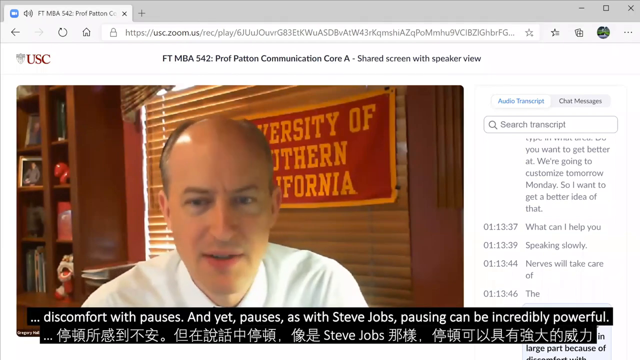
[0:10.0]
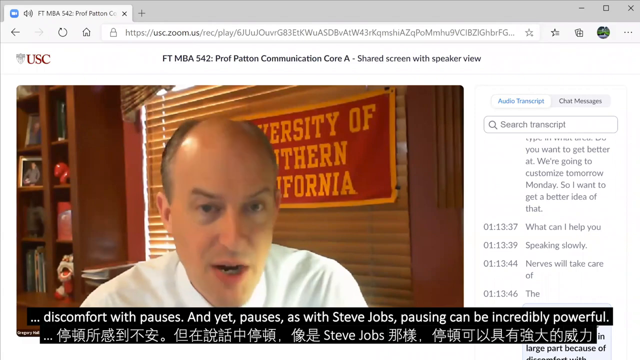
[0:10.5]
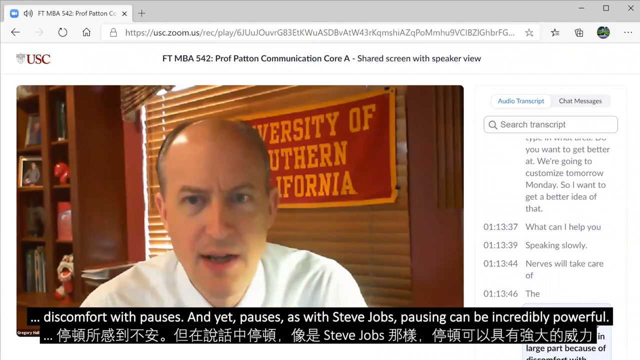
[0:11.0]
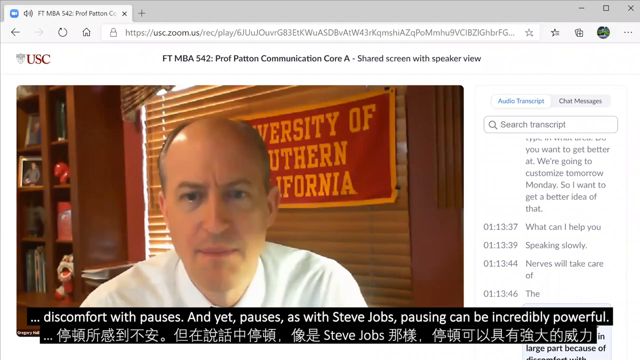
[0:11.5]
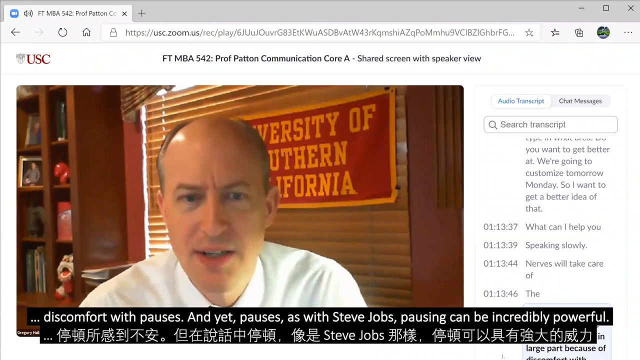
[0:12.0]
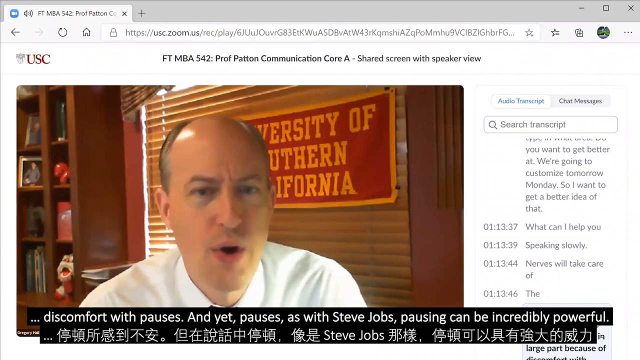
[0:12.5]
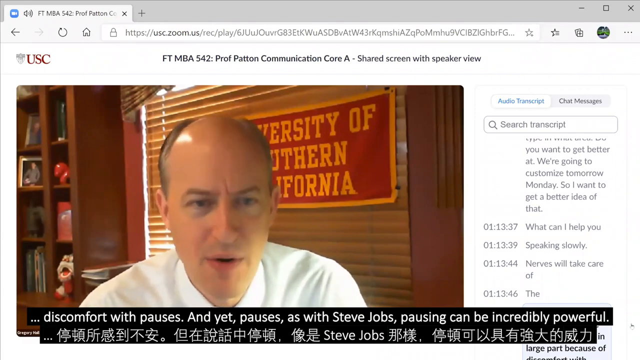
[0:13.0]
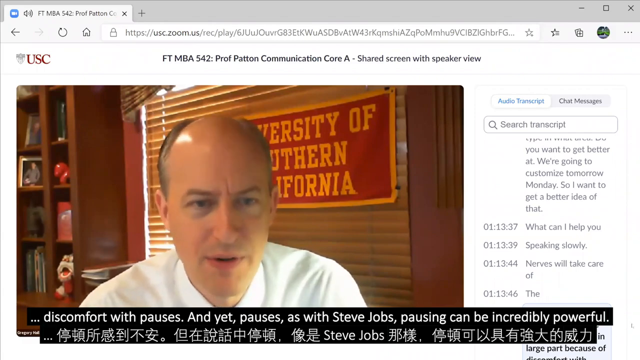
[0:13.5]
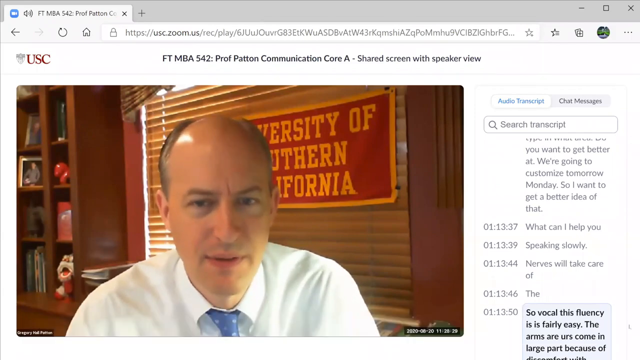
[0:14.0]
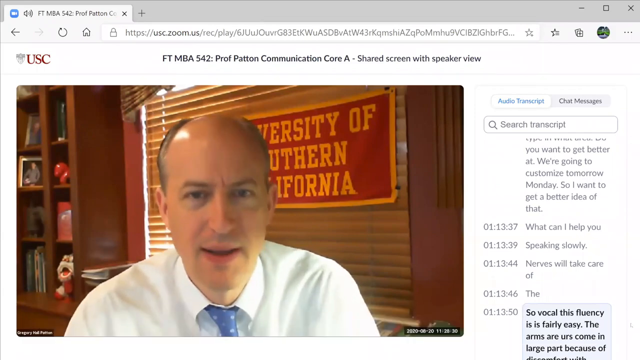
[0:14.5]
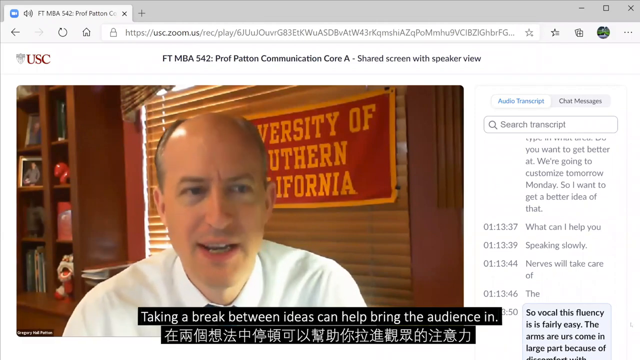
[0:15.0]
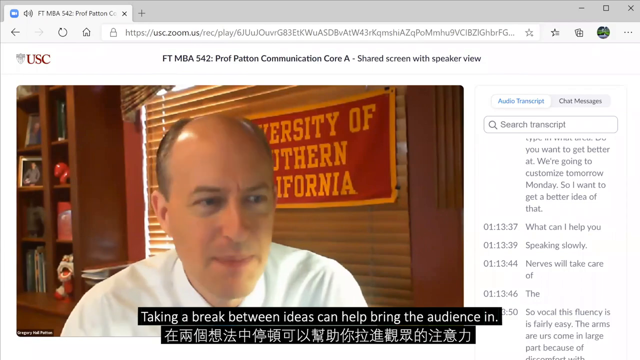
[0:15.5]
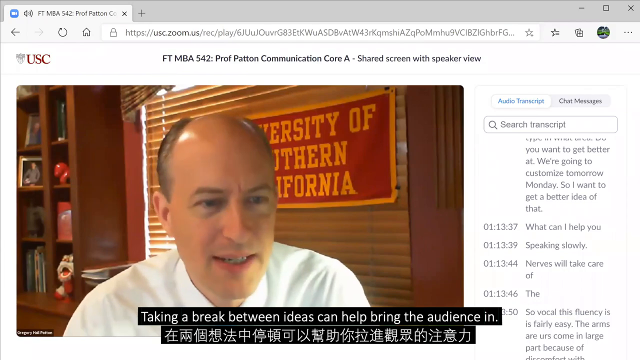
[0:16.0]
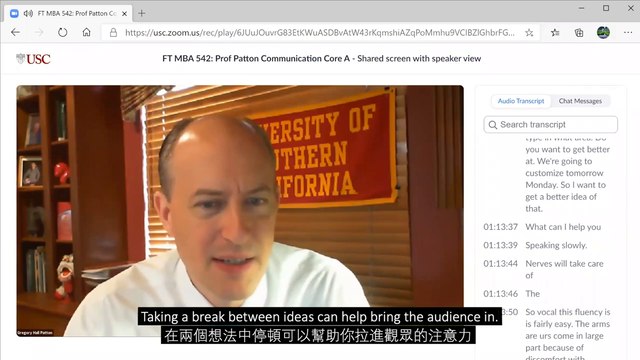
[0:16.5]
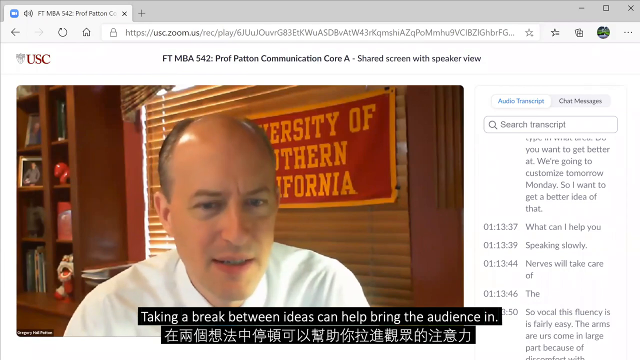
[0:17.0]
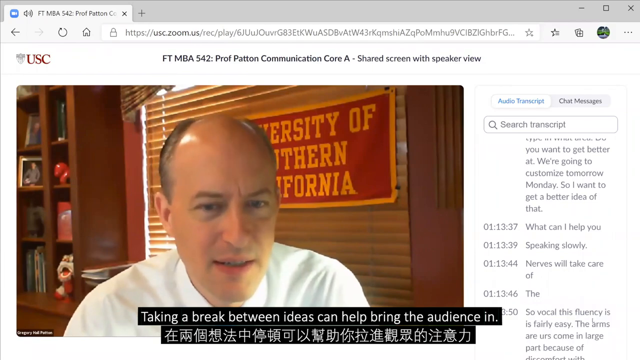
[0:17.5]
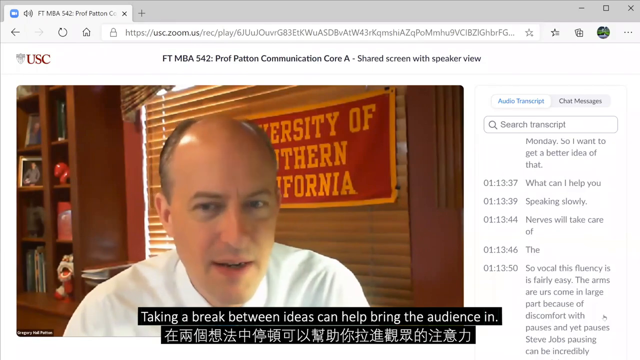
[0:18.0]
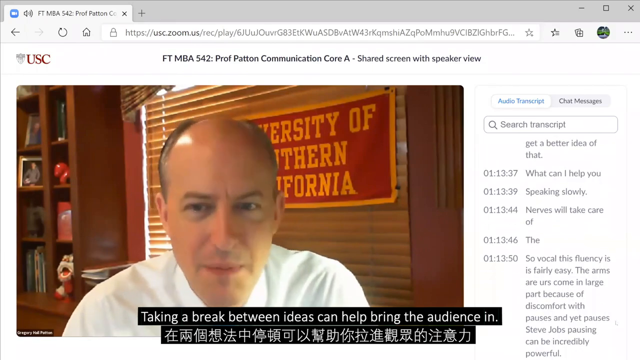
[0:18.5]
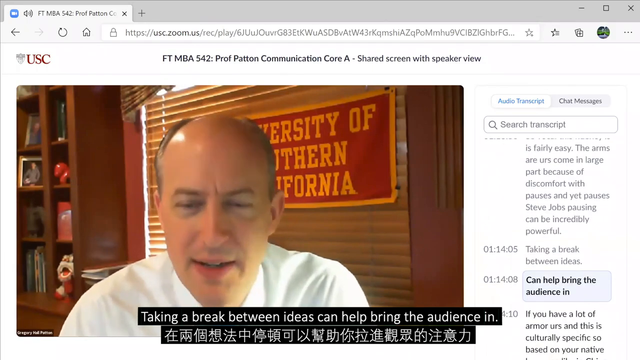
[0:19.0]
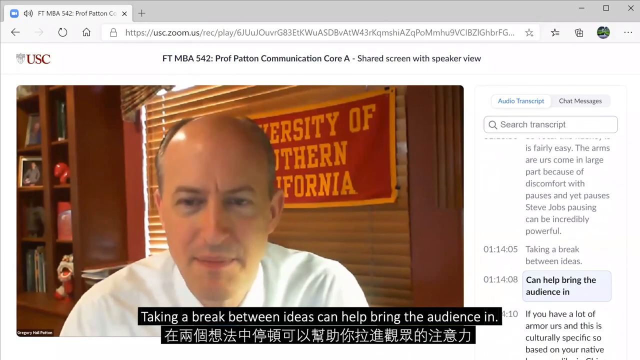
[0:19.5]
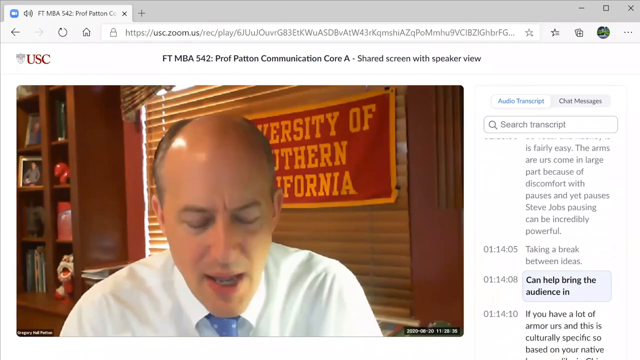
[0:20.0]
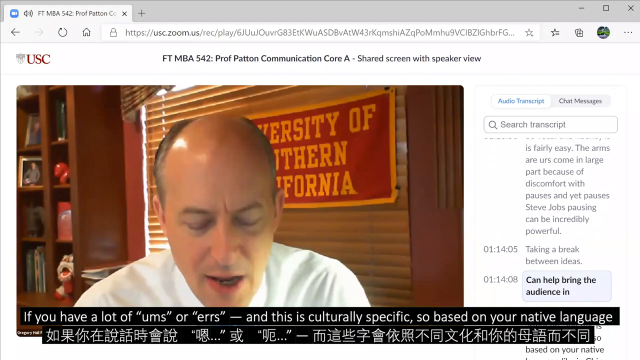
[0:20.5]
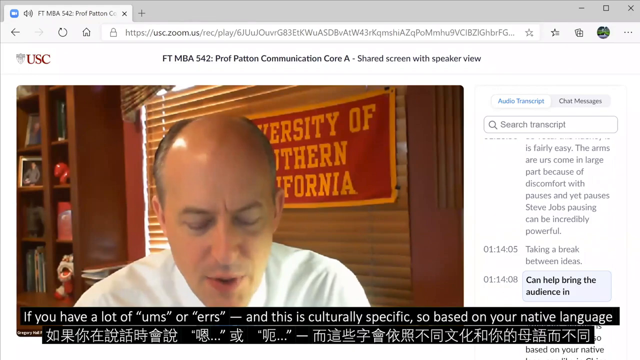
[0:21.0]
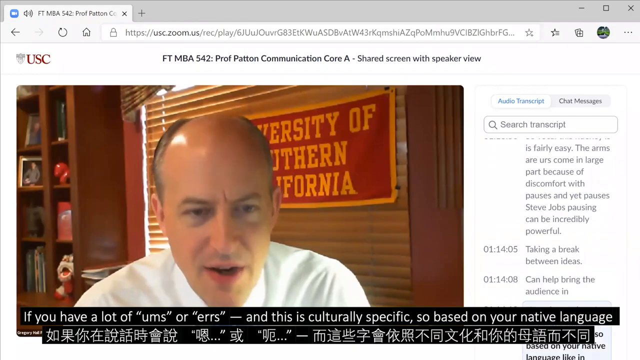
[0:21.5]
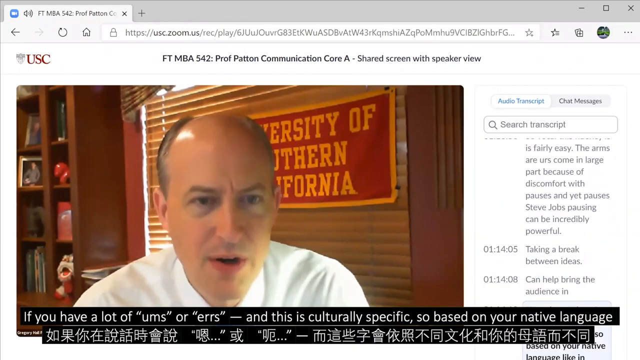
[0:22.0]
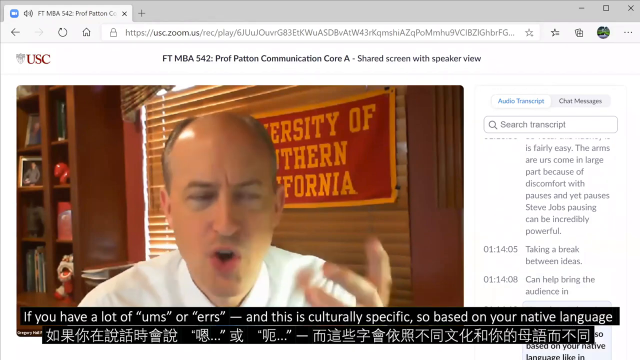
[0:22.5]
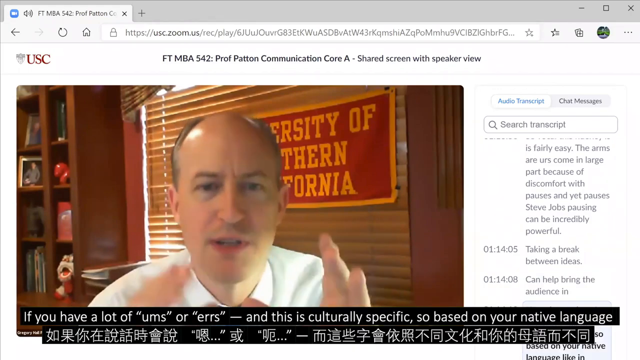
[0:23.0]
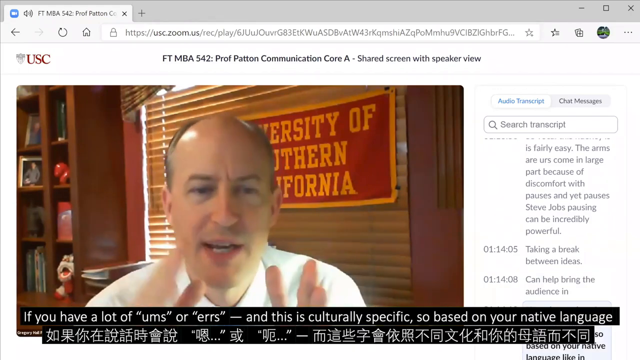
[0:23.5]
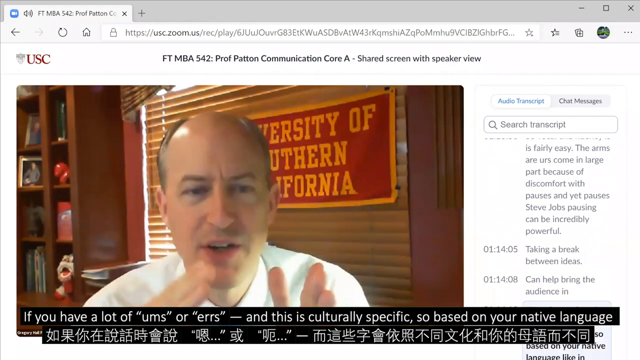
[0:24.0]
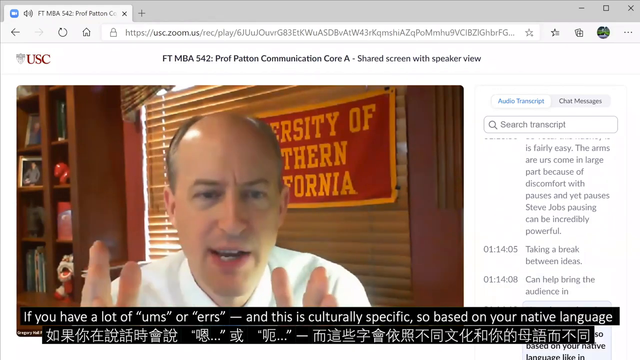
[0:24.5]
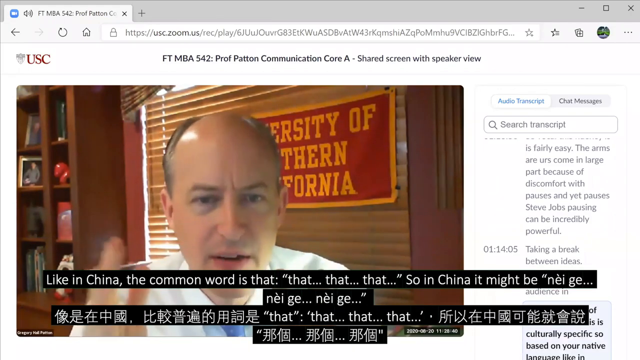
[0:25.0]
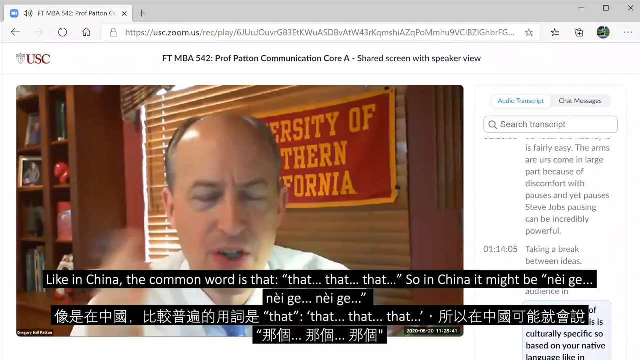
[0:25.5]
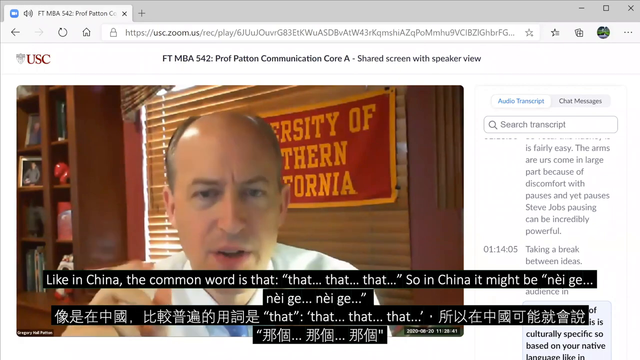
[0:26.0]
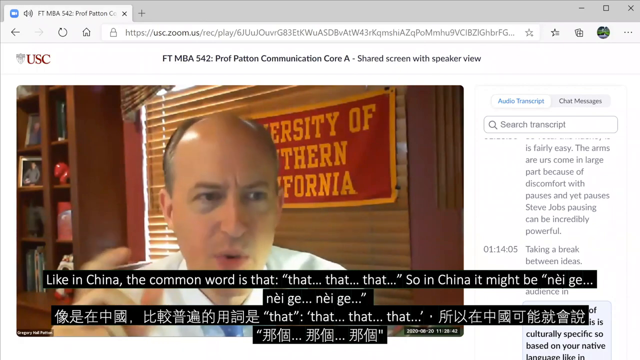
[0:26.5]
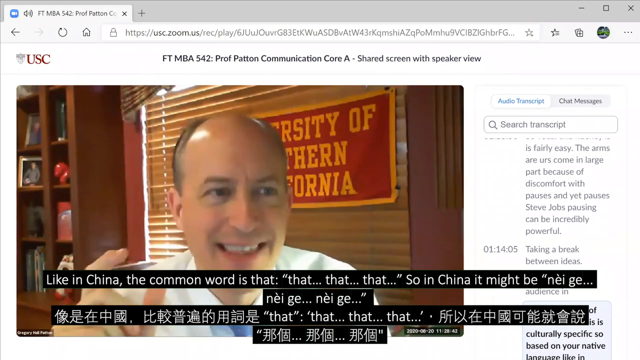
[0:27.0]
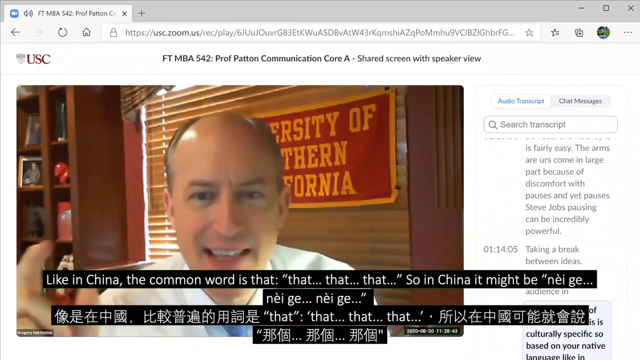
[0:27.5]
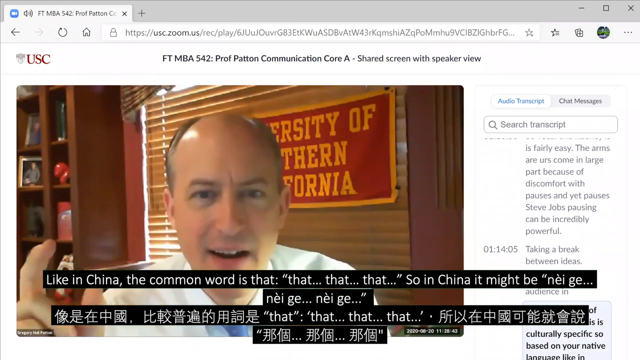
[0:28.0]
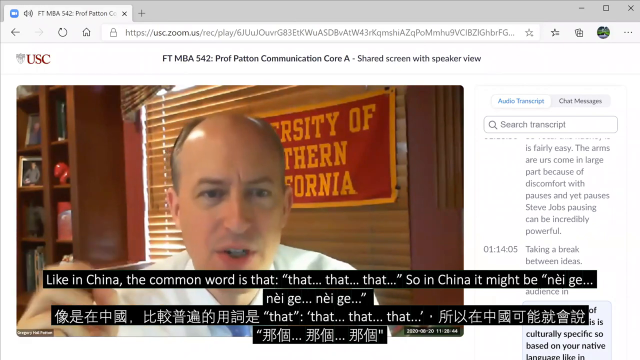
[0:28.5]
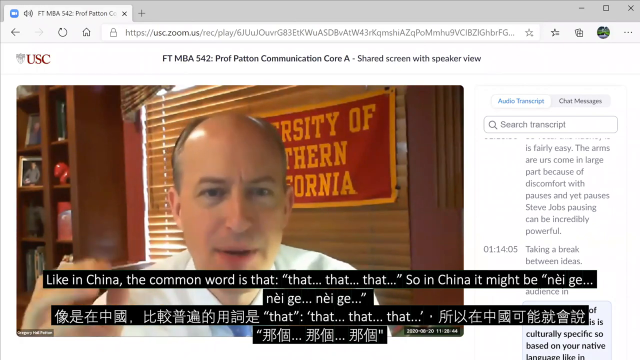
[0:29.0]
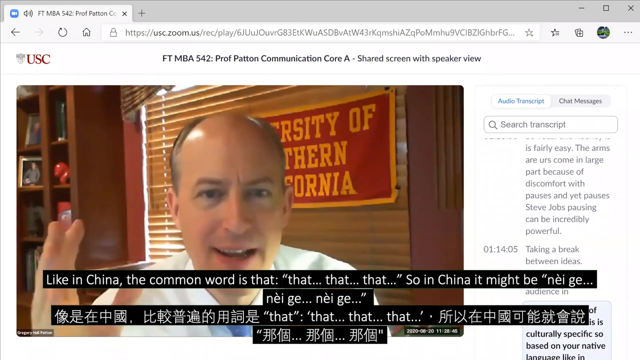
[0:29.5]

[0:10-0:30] A website page is shown on a computer screen, with most of the screen taken up by a video call. A man is talking on the video; he is sitting in an office lined with bookshelves, and behind him is a red flag with yellow writing reading "University of Southern California." He wears a white T-shirt and has a balding hairstyle. The title at the top of the screen reads "FT MBA 542 Professor Patton Communication Core A shared screen with speaker view." On the right-hand side of the screen are some times and transcripts of a conversation between somebody else and the man on the video screen. Below the video, the words he is saying flash up on screen with a Chinese or Japanese translation underneath, for example: "and yet pauses as with Steve Jobs, pausing can be incredibly powerful."